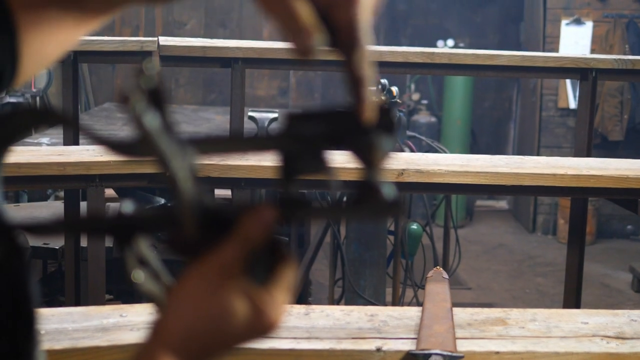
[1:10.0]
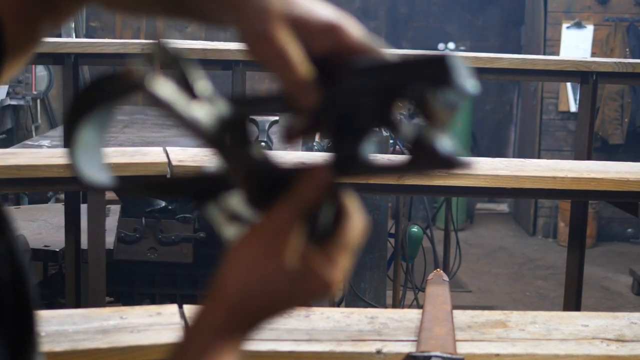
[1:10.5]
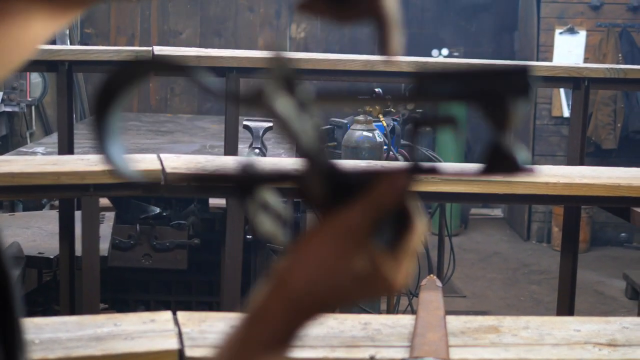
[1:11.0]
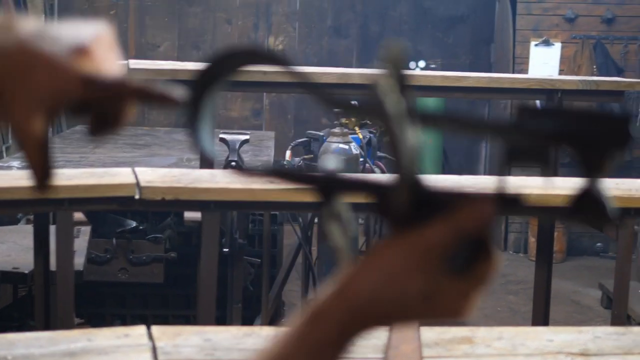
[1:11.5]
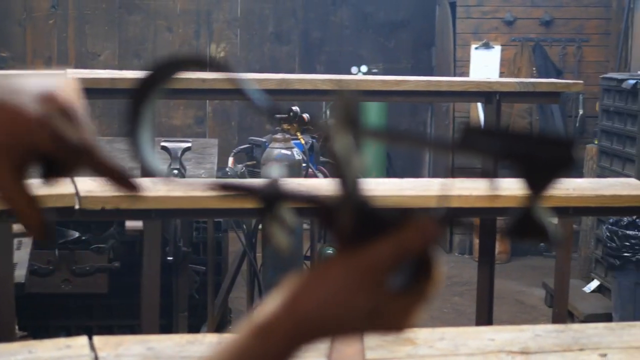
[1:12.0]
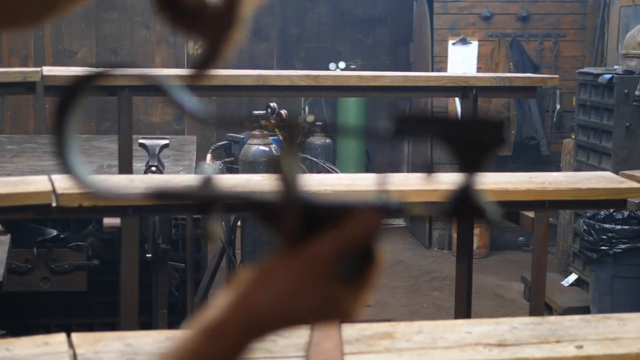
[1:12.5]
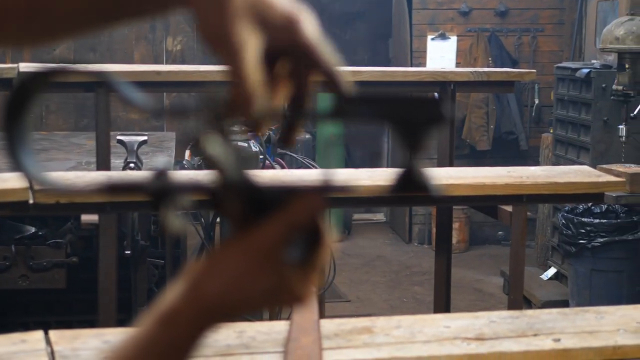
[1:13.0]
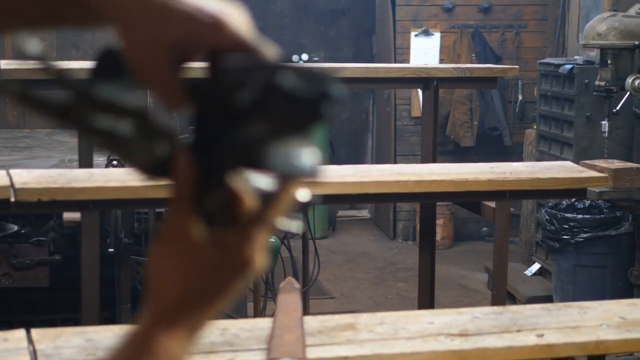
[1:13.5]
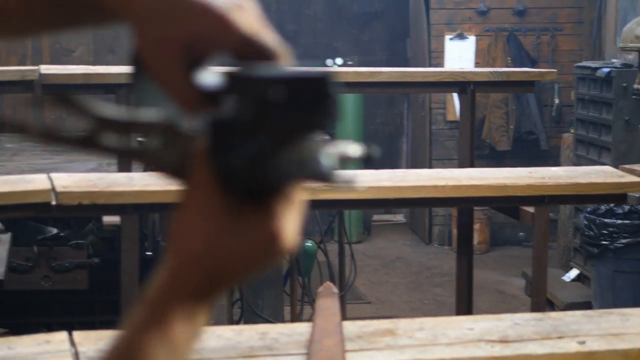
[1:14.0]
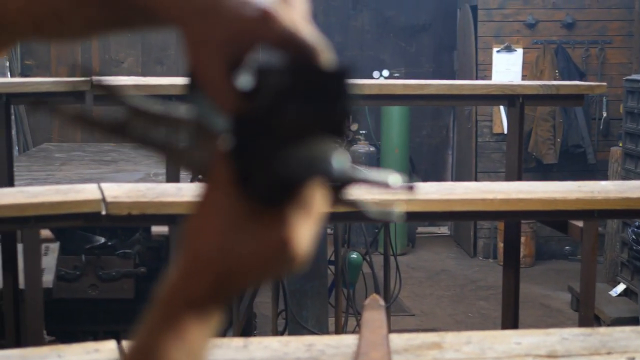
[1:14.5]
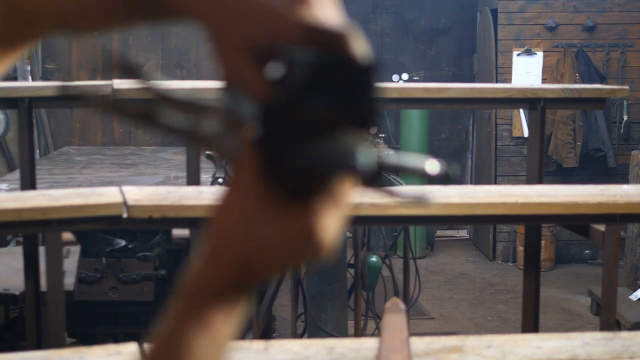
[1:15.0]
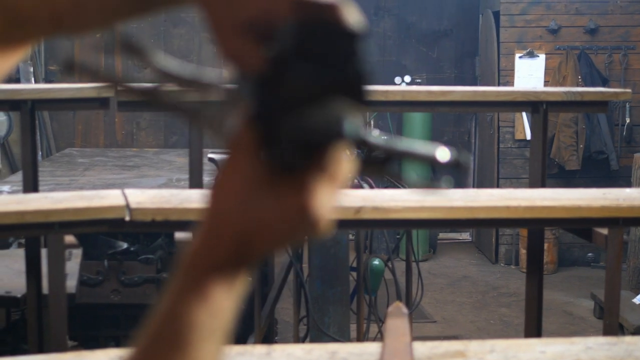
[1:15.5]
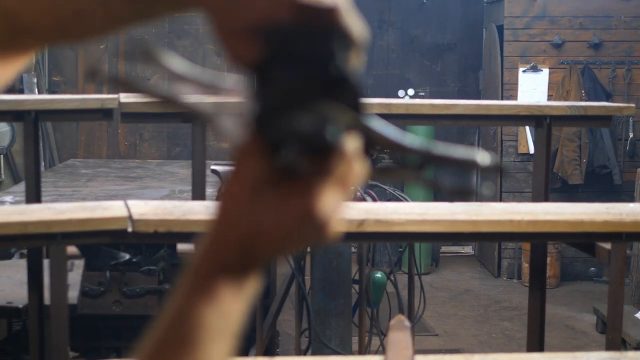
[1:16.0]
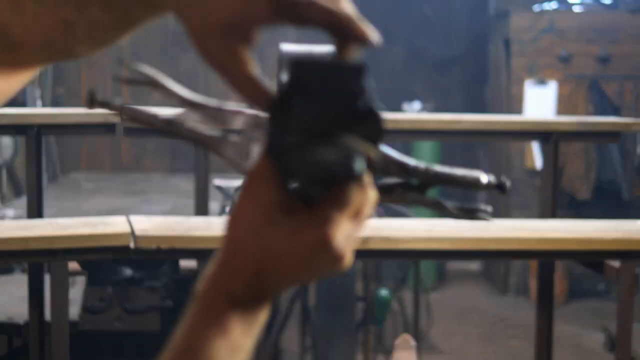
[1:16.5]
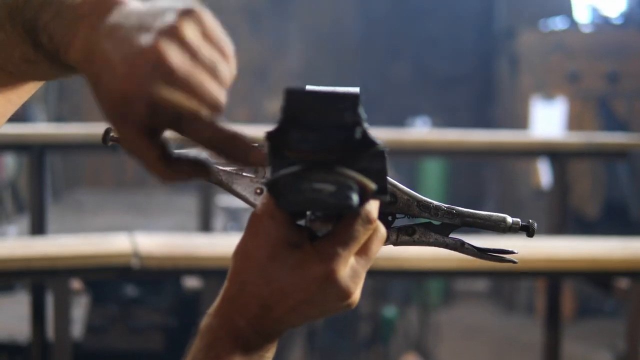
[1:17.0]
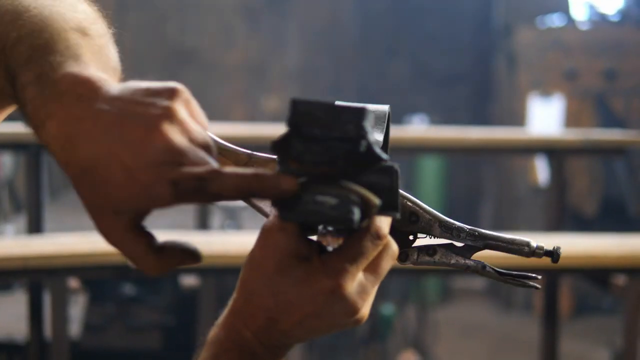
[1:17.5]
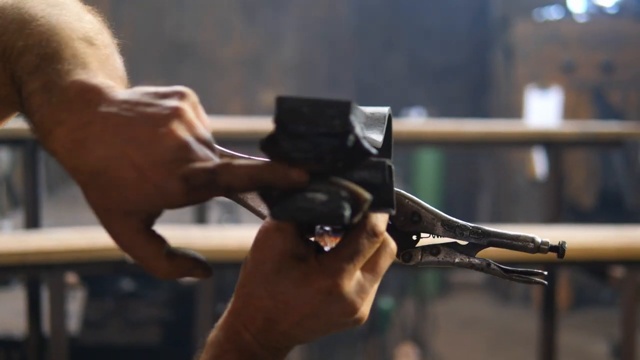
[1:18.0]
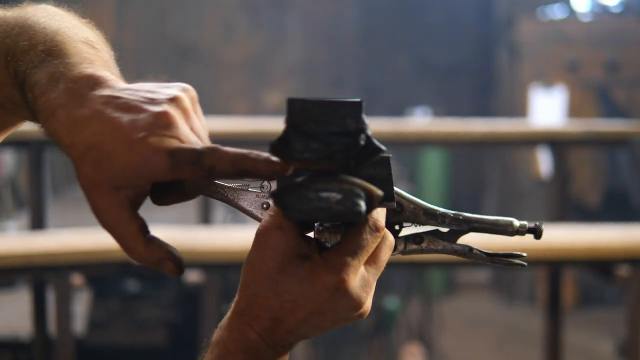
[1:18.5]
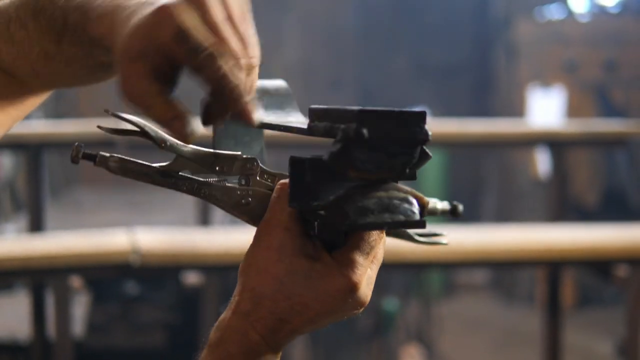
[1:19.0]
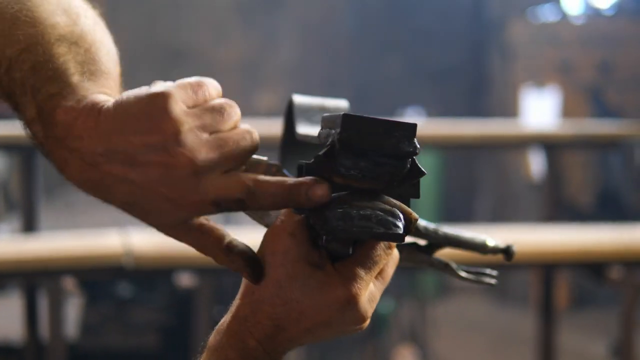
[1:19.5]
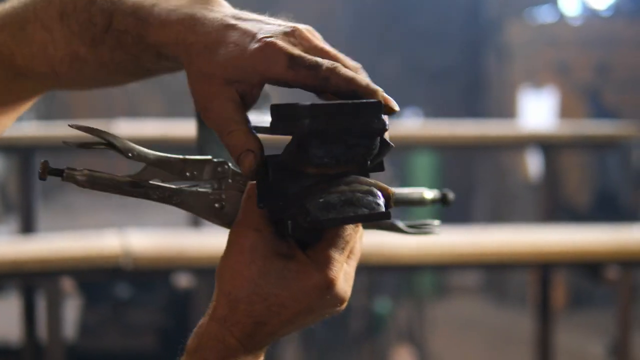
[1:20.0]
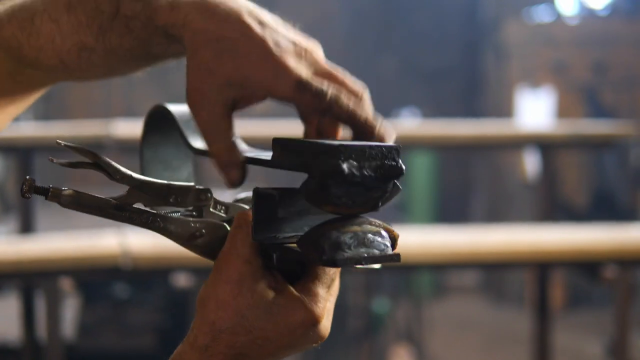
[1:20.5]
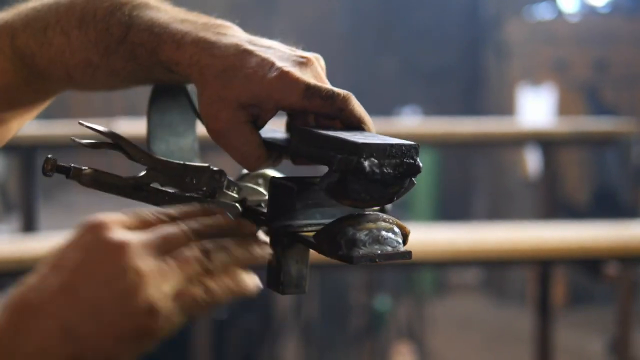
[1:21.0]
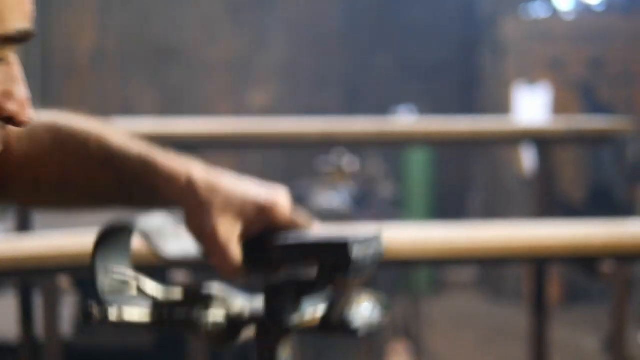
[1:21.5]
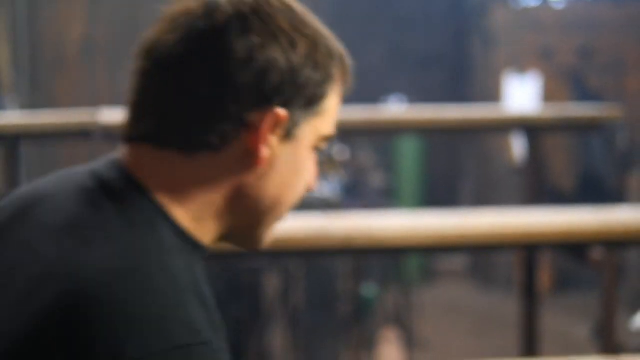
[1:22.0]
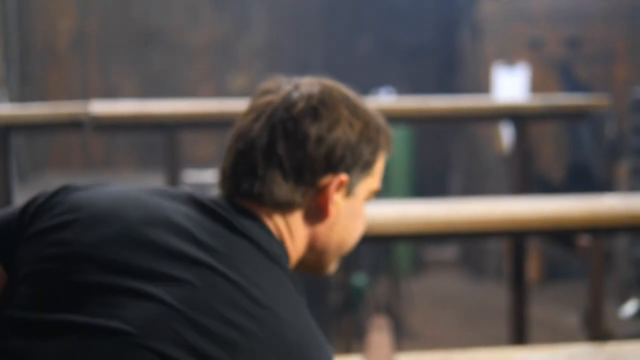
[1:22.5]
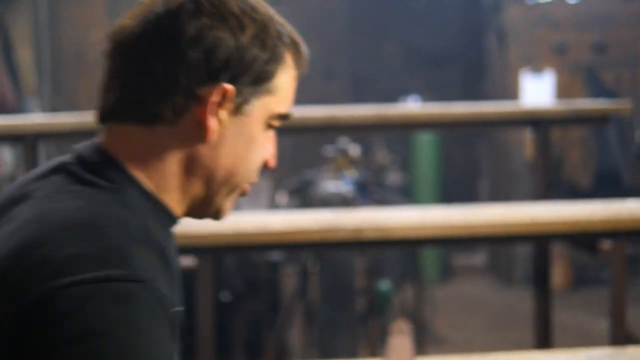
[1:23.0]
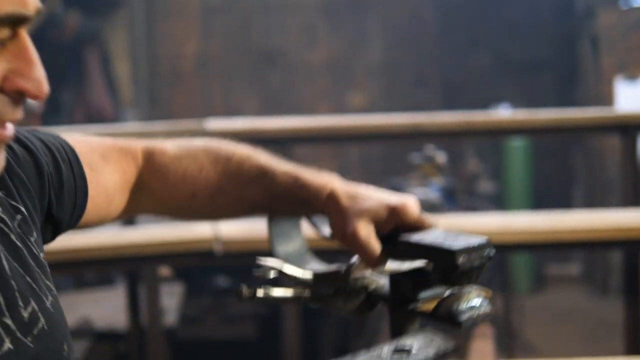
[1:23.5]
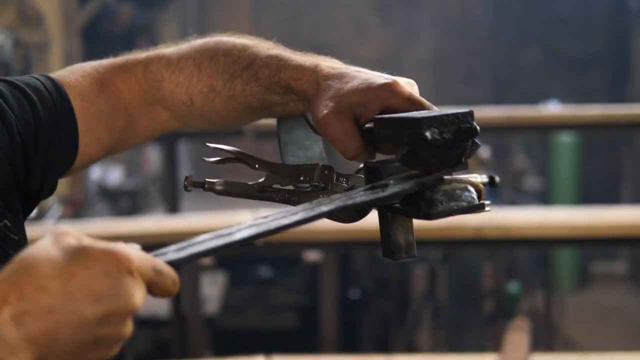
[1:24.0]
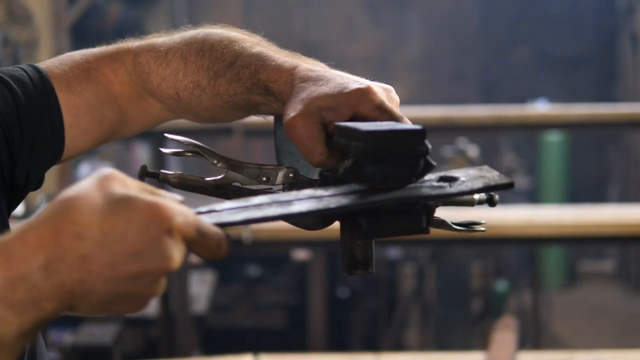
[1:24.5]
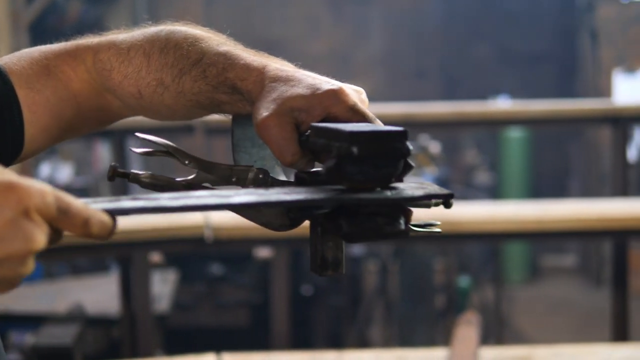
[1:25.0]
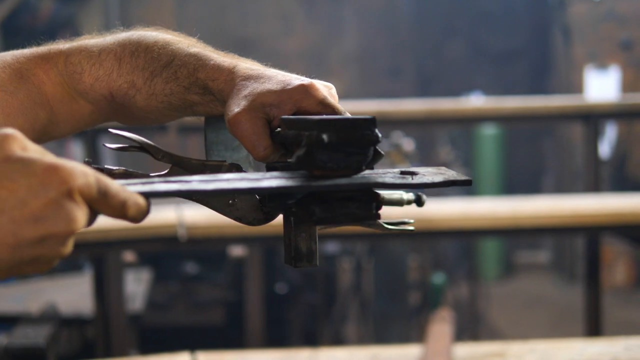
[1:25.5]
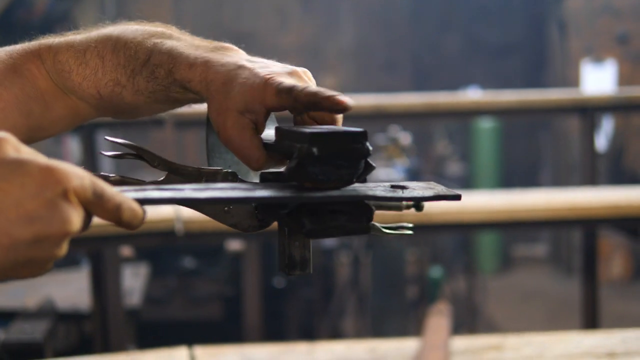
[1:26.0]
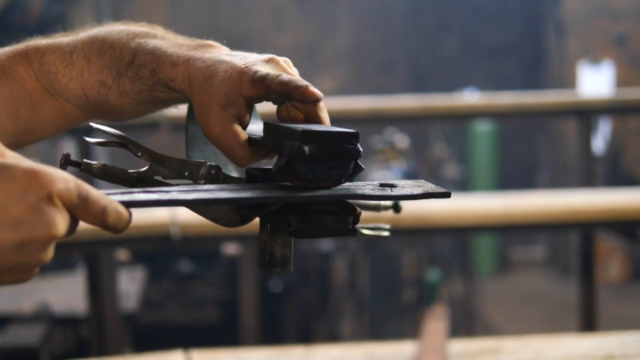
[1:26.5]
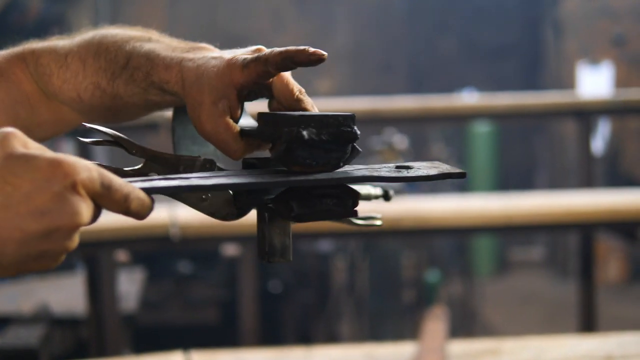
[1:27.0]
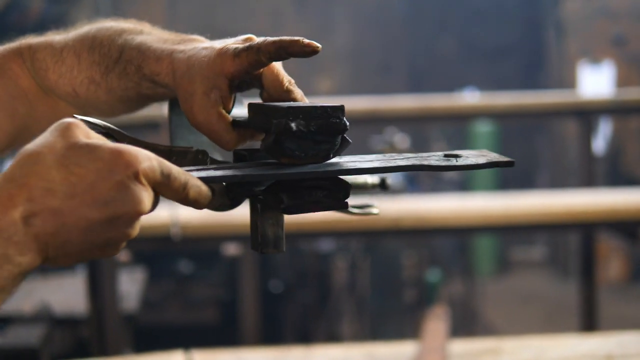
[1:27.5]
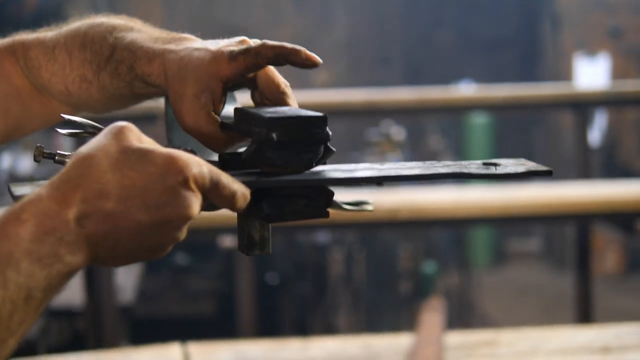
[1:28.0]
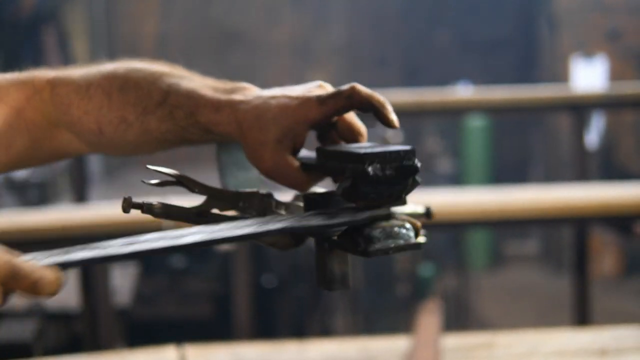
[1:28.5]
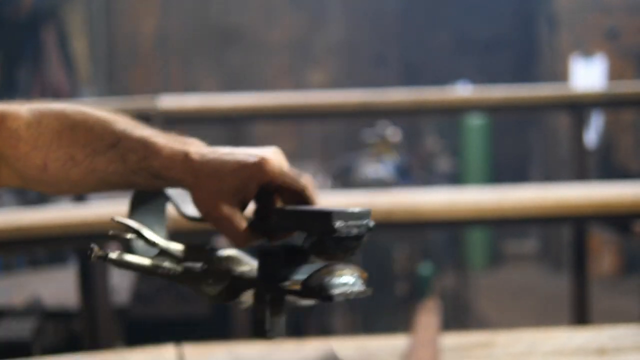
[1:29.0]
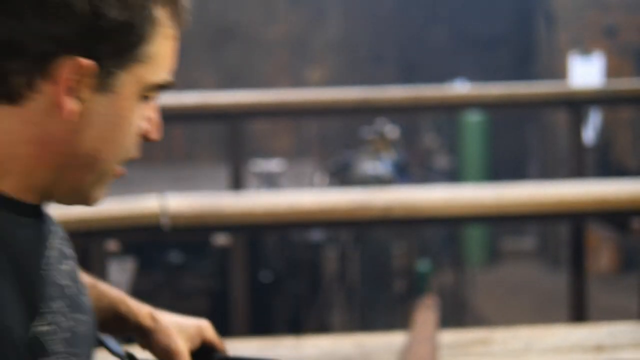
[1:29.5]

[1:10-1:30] The camera focuses, now in focus, on the round piece that still has two vice grips on it, and the man shows its front. There is a little space with two half-moon rounded hinges that oppose each other, and the front is beveled. He slides the flat piece in sideways: the end with the hole goes in first, and the soldered part on top, which looks like a rod, points up and goes in. He slides it in and out, pulls it out, and puts it down.